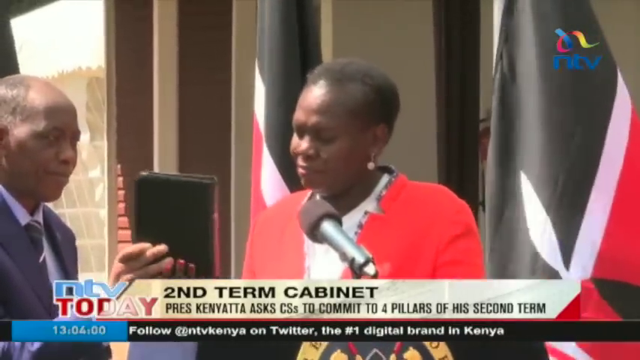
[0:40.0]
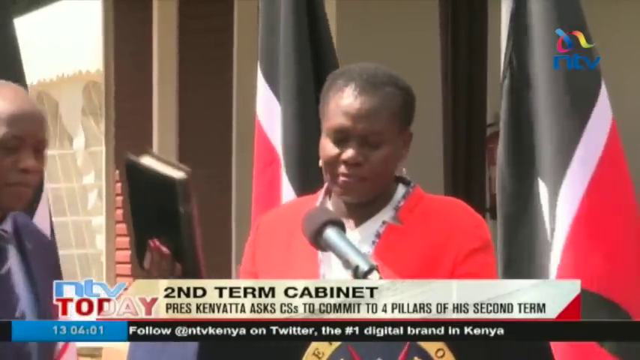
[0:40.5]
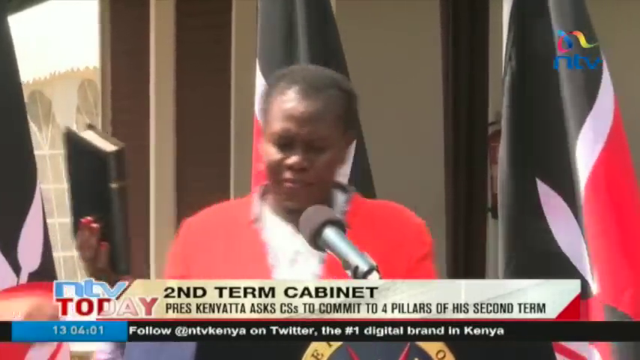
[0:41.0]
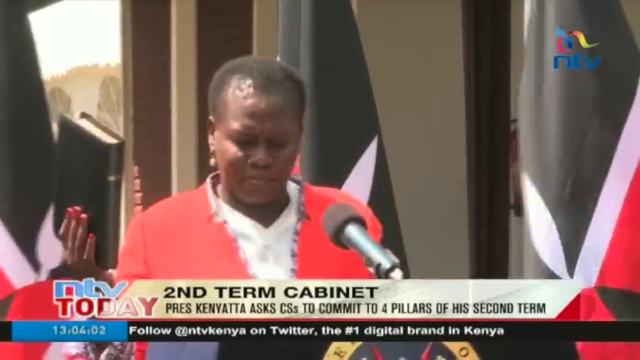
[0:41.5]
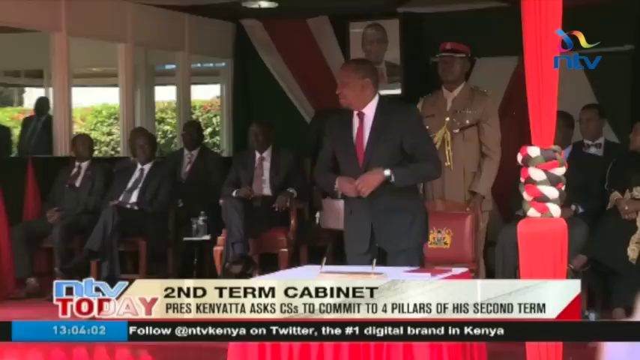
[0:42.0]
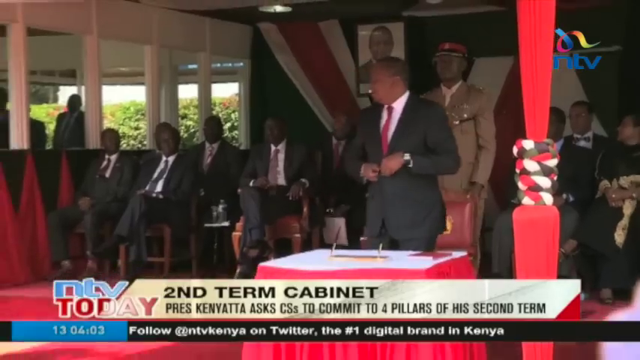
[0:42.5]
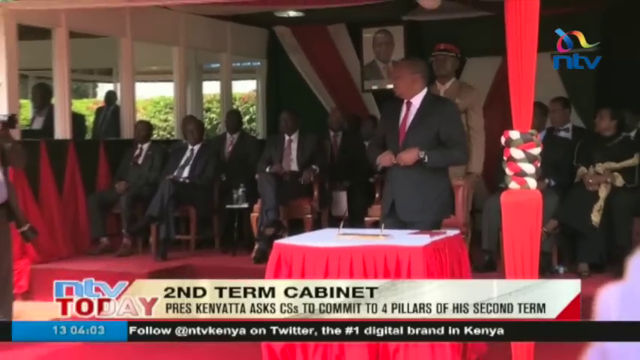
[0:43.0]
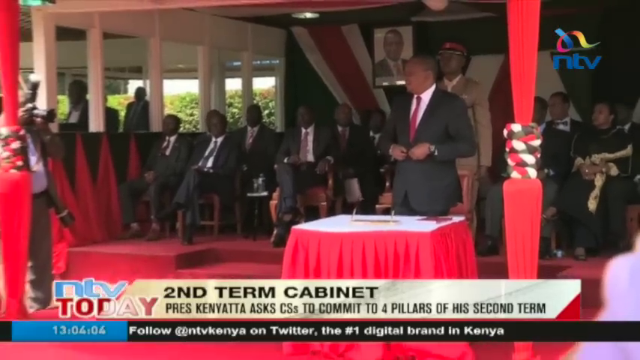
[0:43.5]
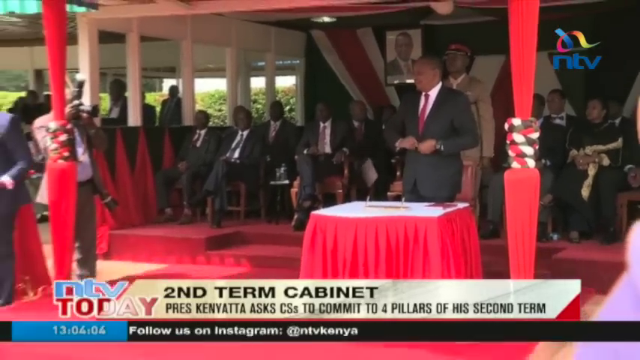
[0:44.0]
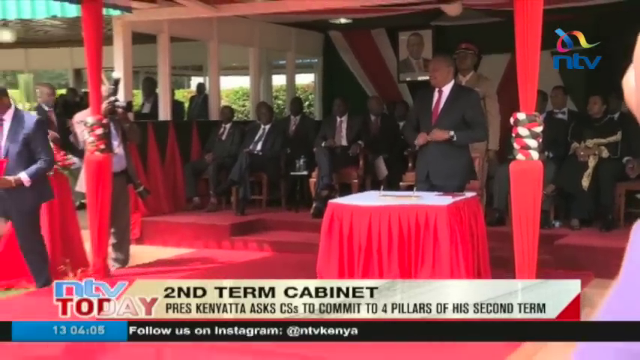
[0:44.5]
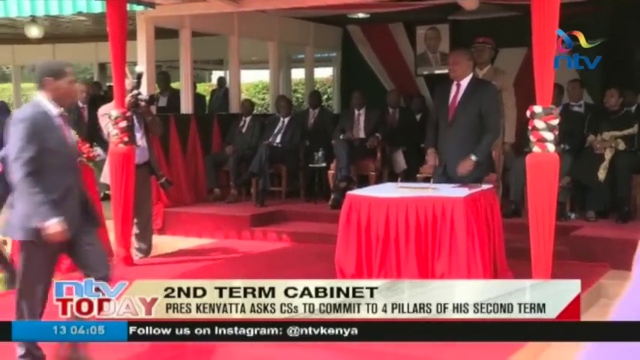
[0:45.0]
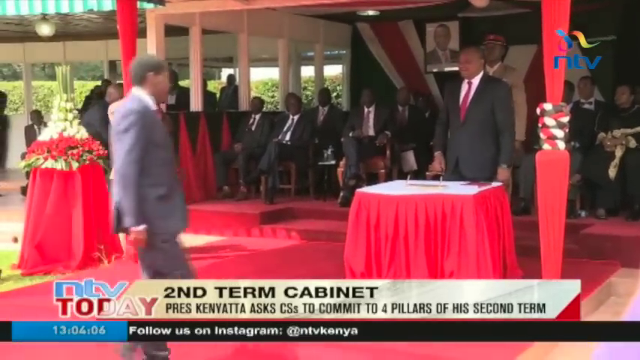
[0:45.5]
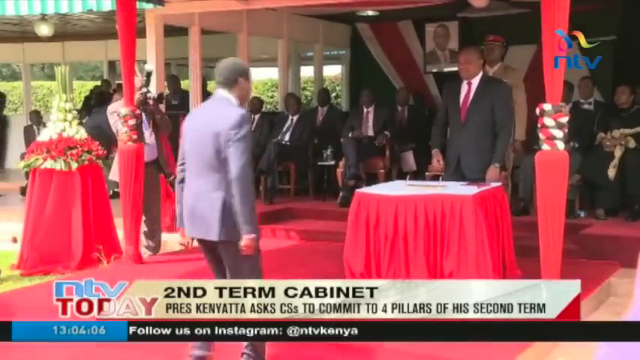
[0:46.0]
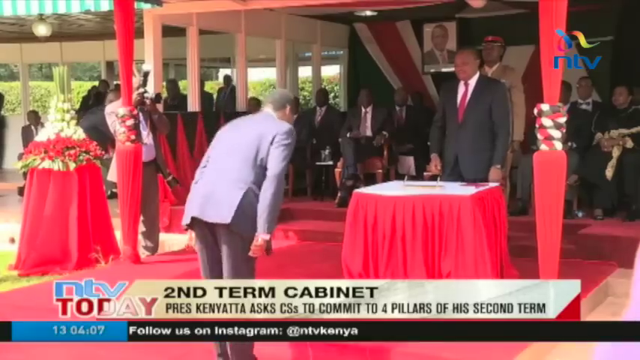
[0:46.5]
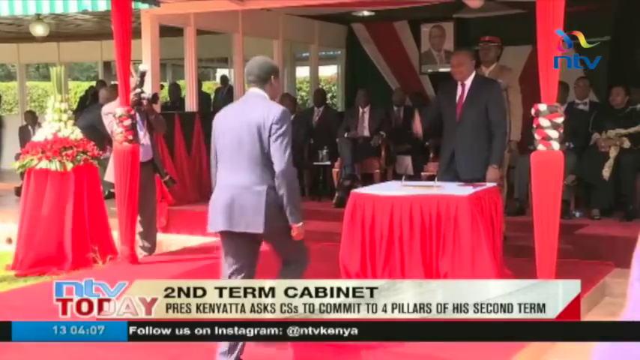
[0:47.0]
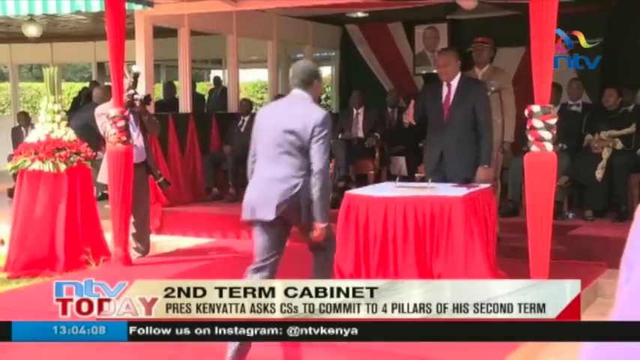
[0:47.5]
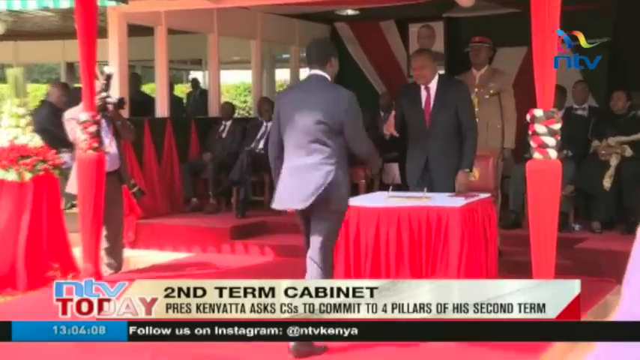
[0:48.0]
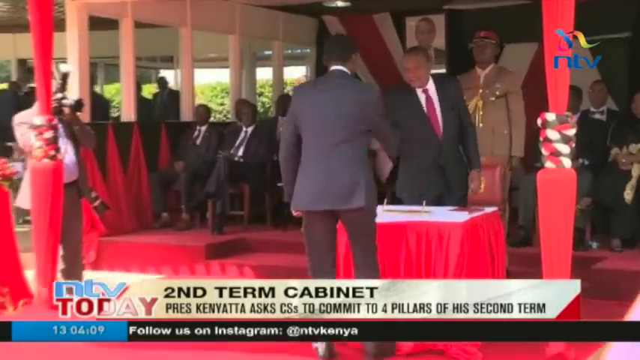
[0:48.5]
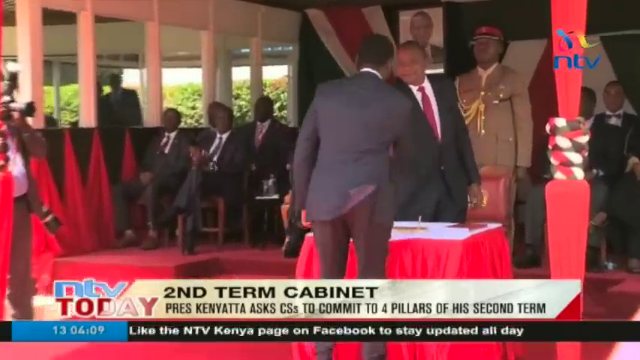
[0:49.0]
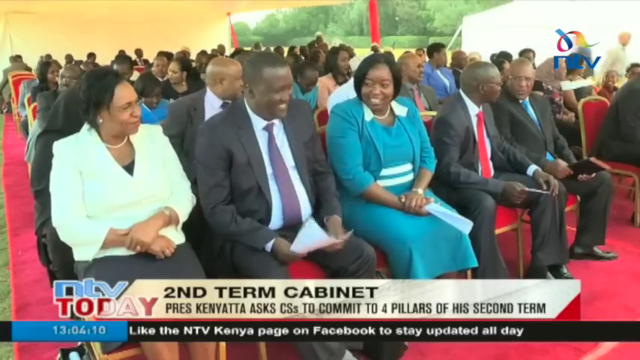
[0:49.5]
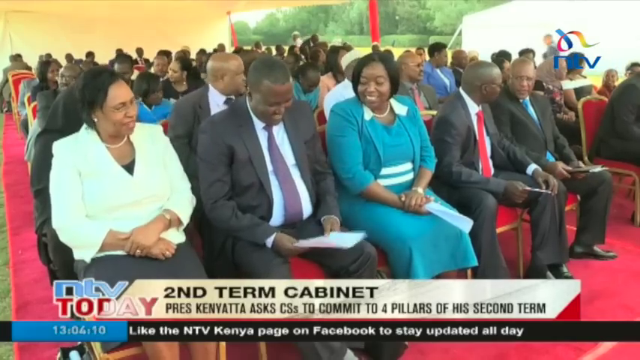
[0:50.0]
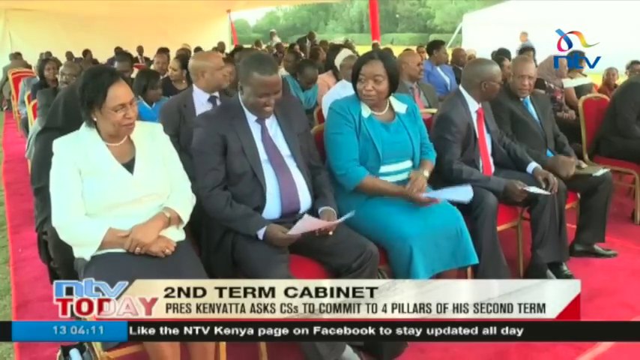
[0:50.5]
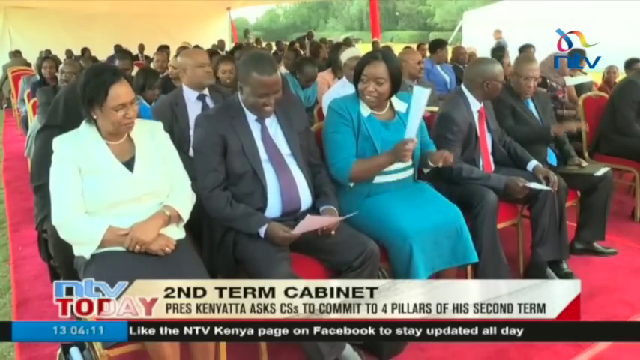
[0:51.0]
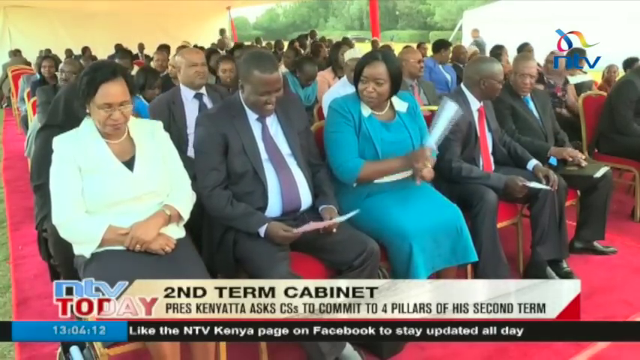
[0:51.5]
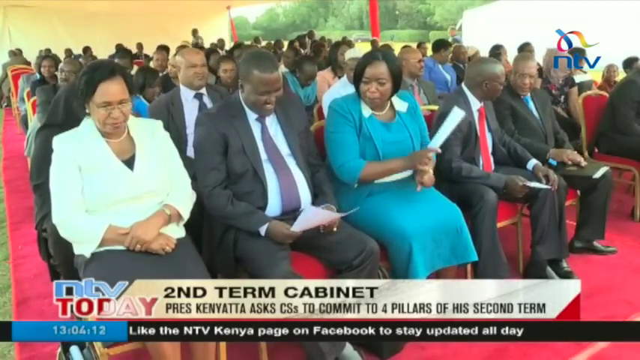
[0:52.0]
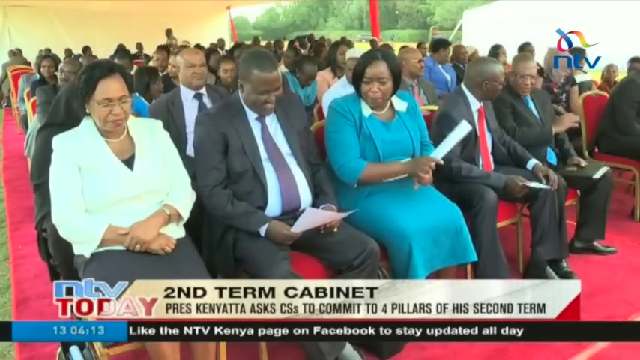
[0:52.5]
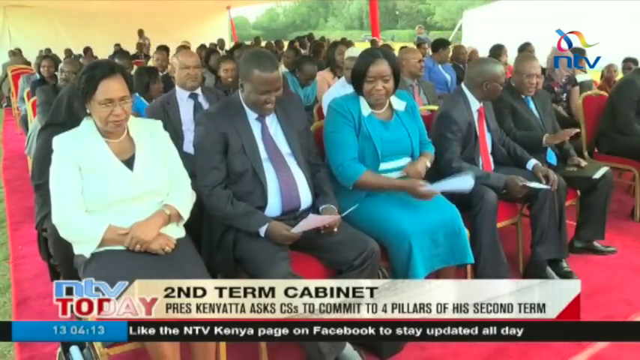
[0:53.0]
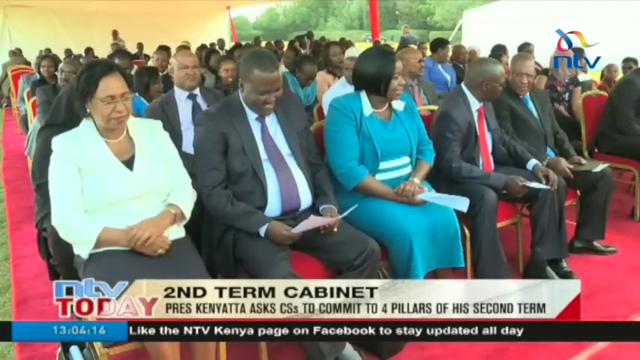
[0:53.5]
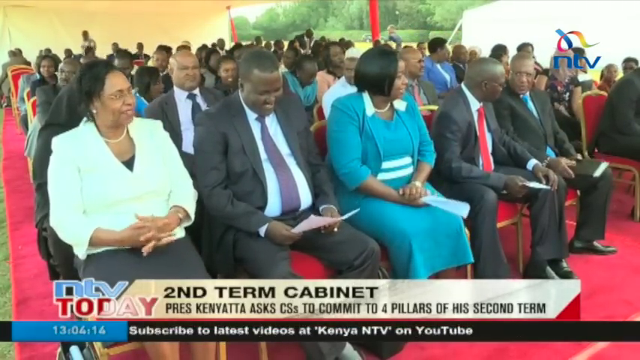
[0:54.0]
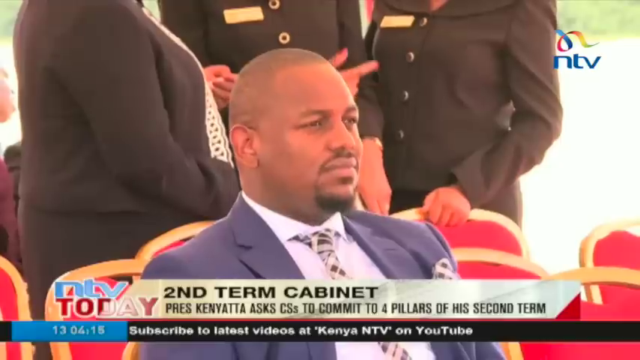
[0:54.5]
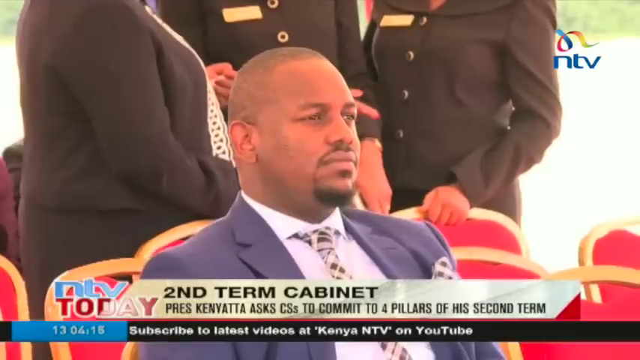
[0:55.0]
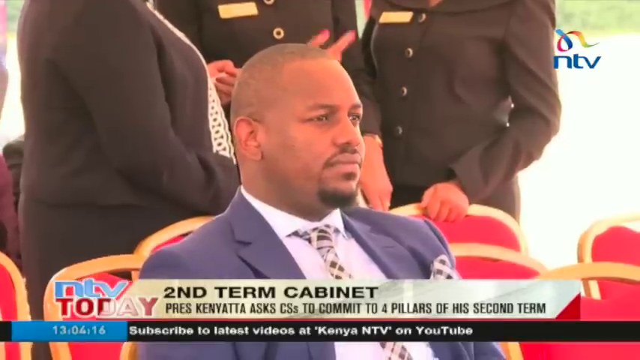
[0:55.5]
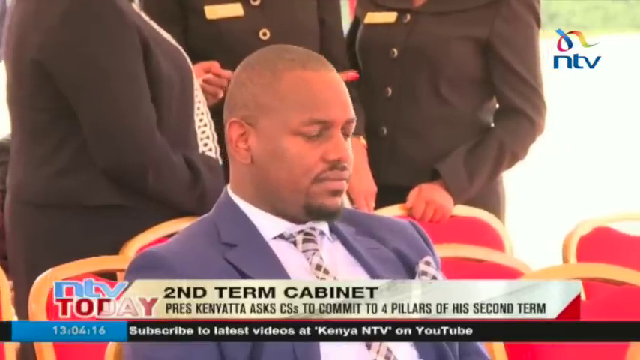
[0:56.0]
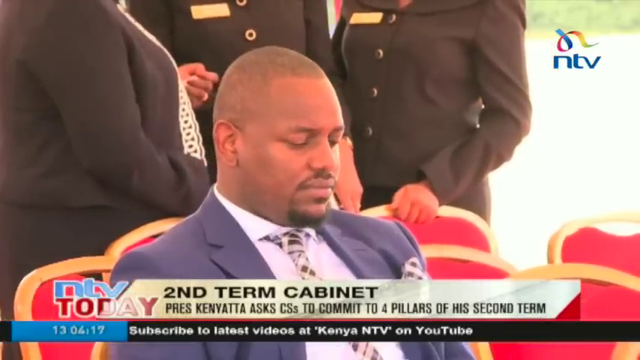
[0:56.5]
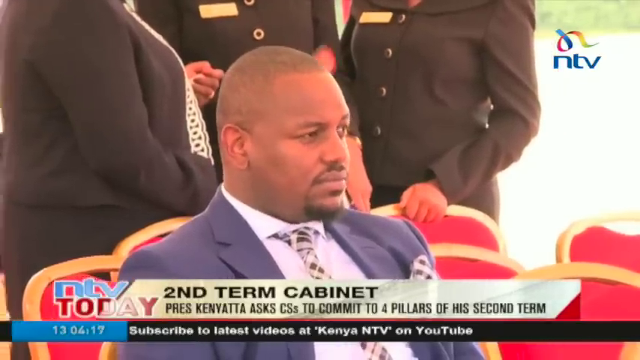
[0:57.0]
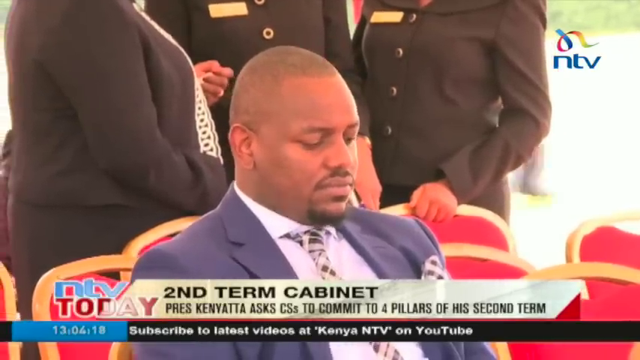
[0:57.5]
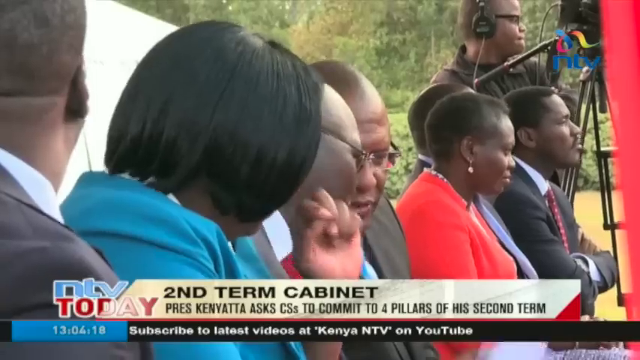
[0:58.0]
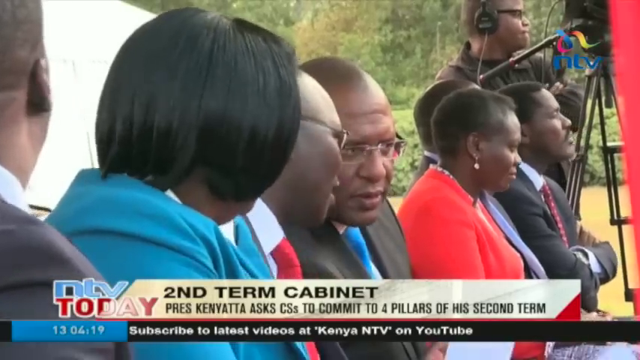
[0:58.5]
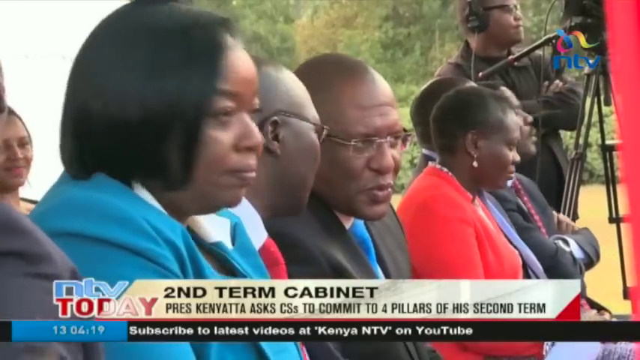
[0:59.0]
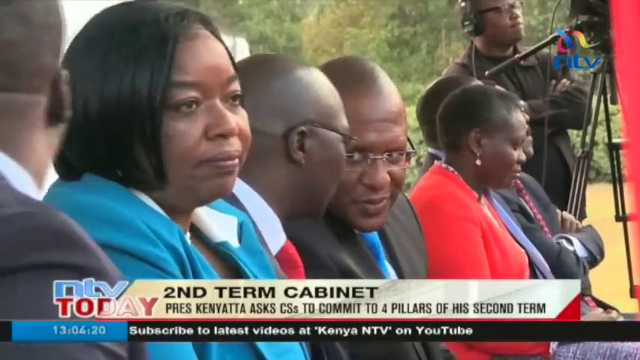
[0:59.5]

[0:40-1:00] The NTV news story shows the cabinet at the state house, with the headline "second term cabinet" and "President Kenyatta asks CSs to commit to four pillars of his second term." President Kenyatta addresses the cabinet, and a man bows as the president shakes his hand. Next, many members of the cabinet sit on chairs on a red carpet outside, under a shade at the state house, talking to each other. One man is on his phone, and at the back there are three men, among a lot of people at the conference. A lady and a woman are shown swearing in with the Bible.